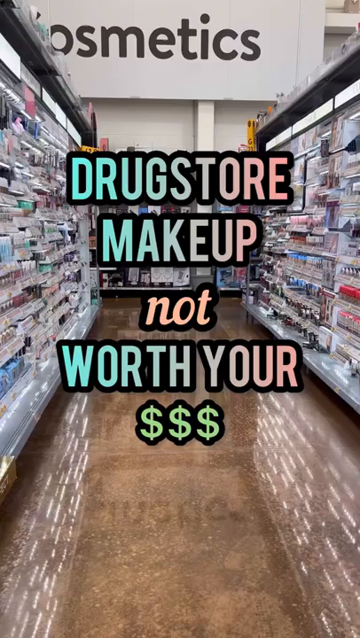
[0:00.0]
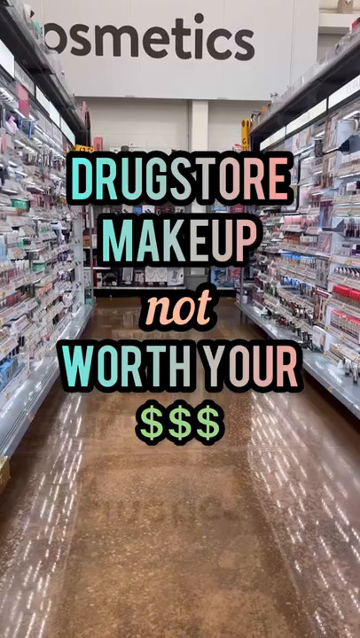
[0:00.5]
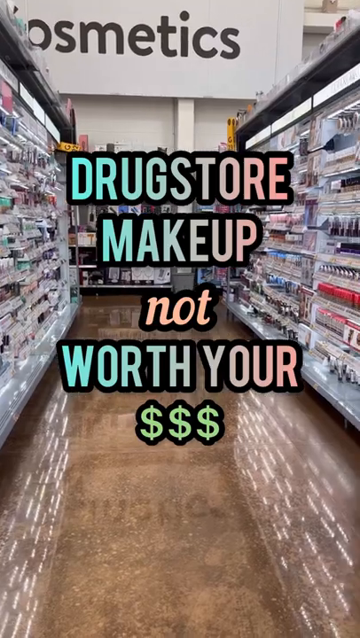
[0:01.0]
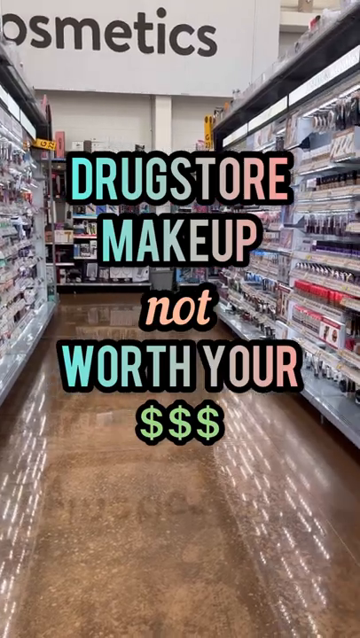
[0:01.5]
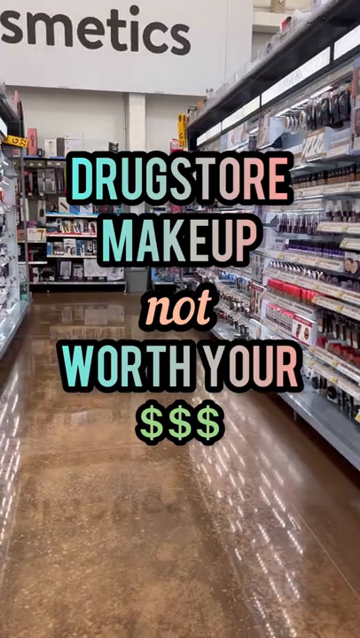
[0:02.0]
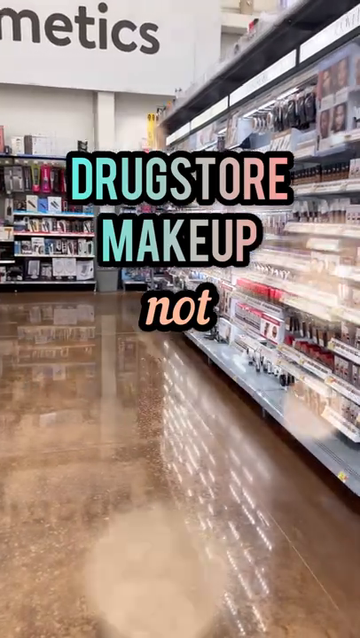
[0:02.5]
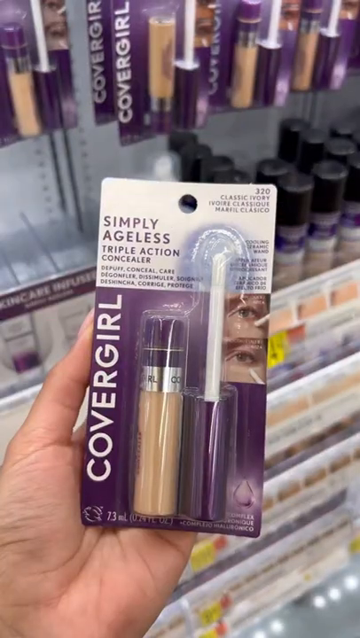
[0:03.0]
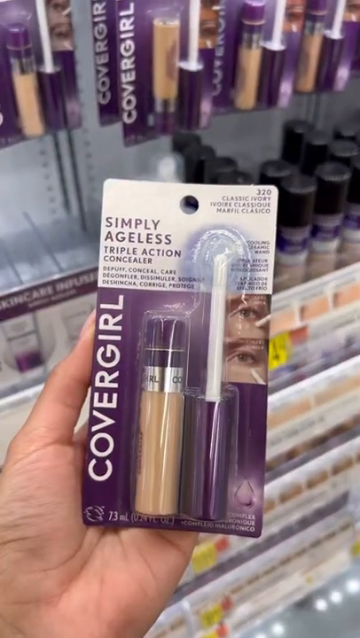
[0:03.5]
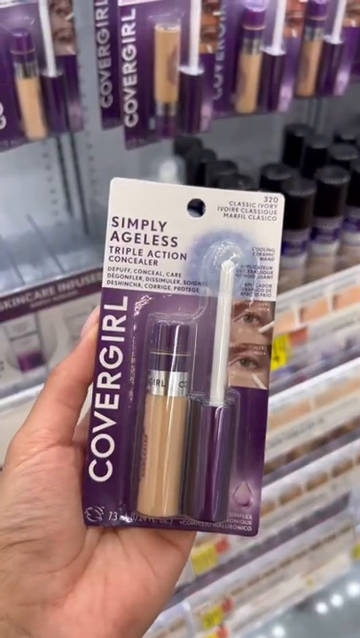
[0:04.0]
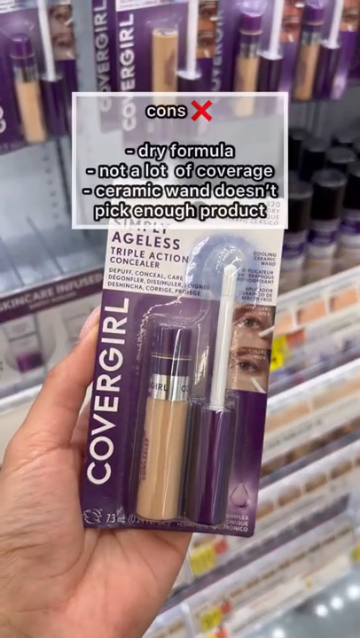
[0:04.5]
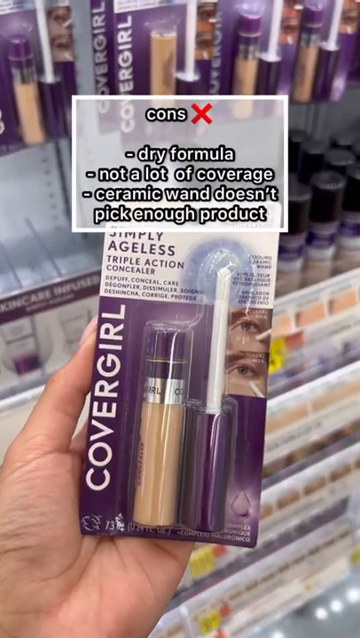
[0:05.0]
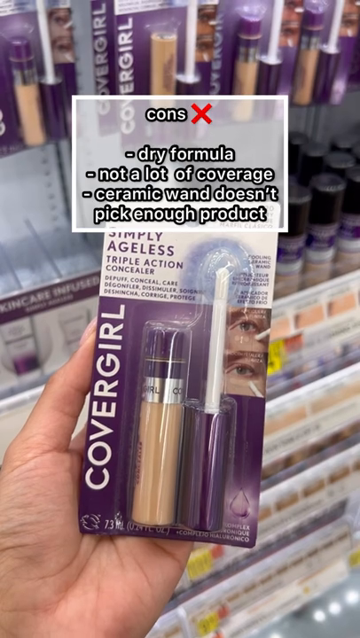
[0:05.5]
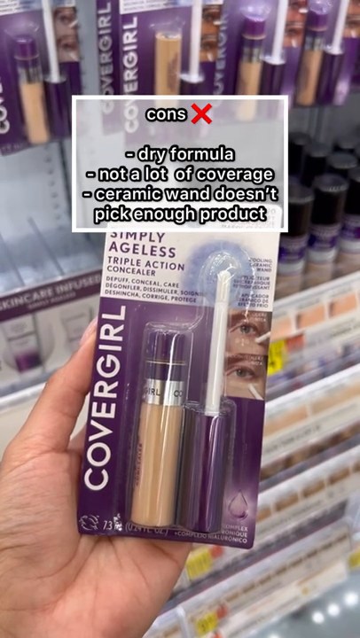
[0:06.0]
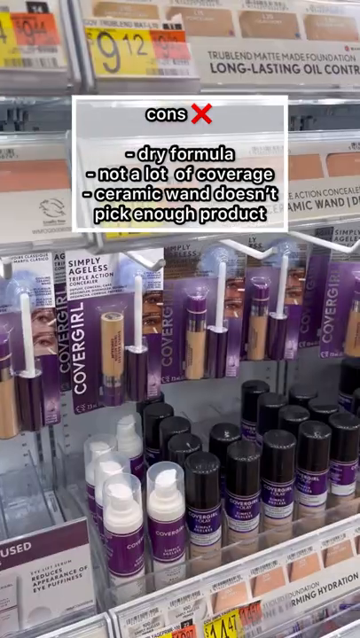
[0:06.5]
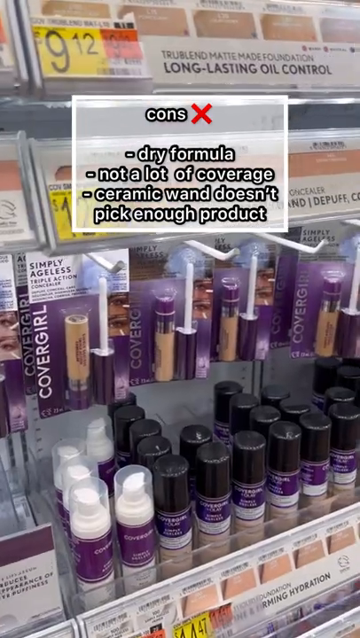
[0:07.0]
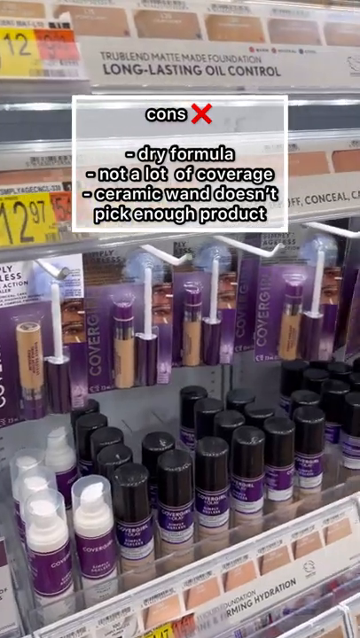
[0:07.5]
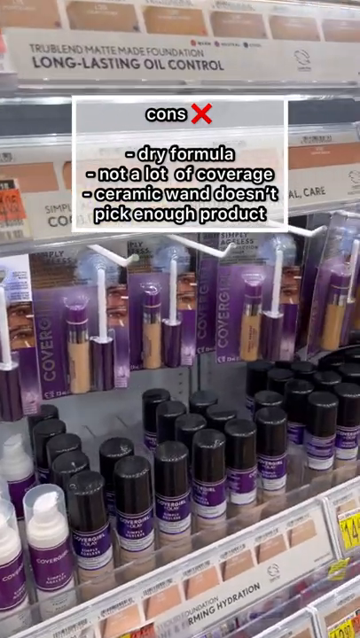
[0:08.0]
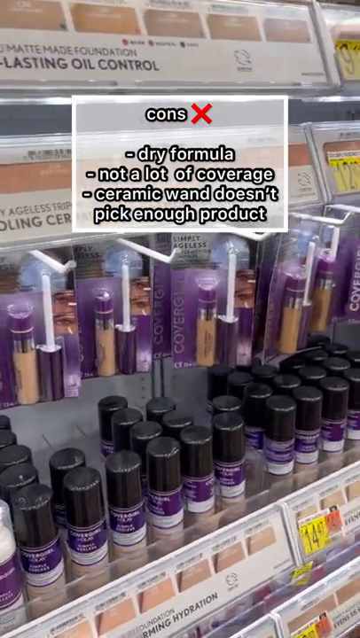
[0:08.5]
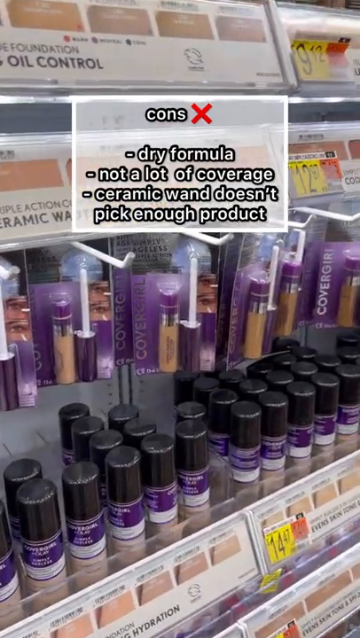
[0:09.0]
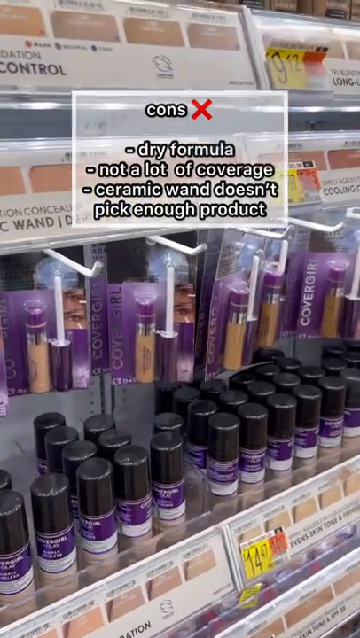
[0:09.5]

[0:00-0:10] The video is about drugstore makeup that is not worth the money. It opens on a drugstore aisle full of makeup. A CoverGirl Simply Ageless product appears, with a box above it that lists the cons of the item, giving reasons not to use it. The camera then shows a number of other foundations, with text reading "try this instead," this time featuring Elf Eyes Lips Face makeup. Next come the cons of a lipstick product, though the brand name is not clearly shown. Then "try these instead" appears, showing four lipsticks and swatches of their colors on a Caucasian woman's arm. The brands of these lipsticks are not shown well either; mostly just their packaging is visible. The main con listed for the first lipstick is that it is not pigmented.